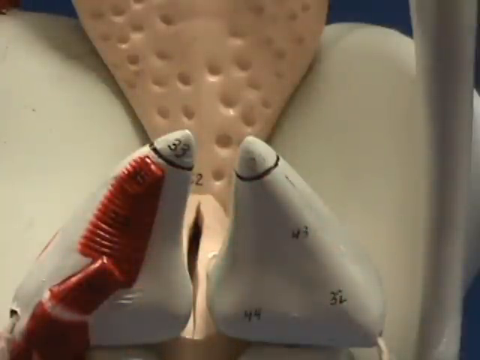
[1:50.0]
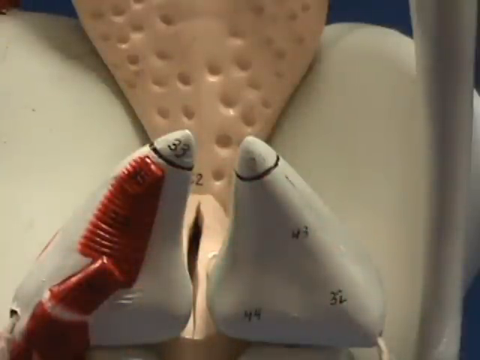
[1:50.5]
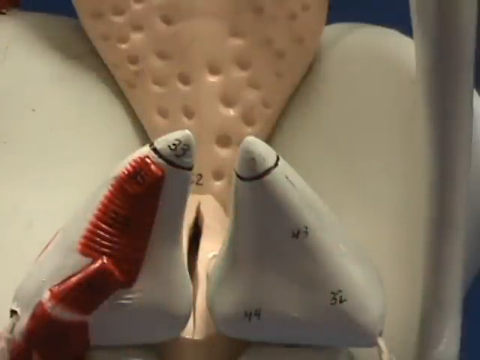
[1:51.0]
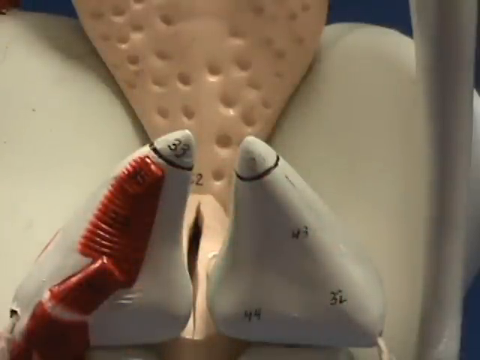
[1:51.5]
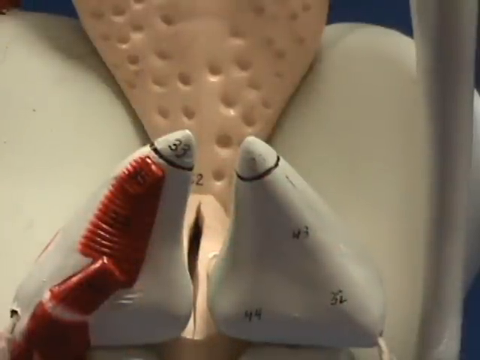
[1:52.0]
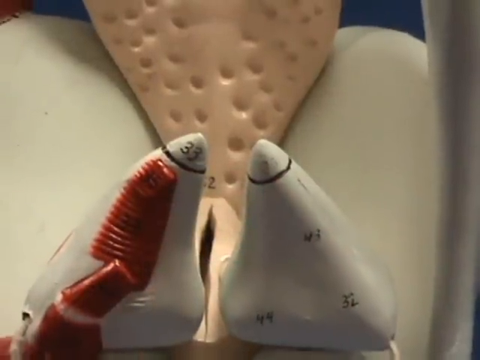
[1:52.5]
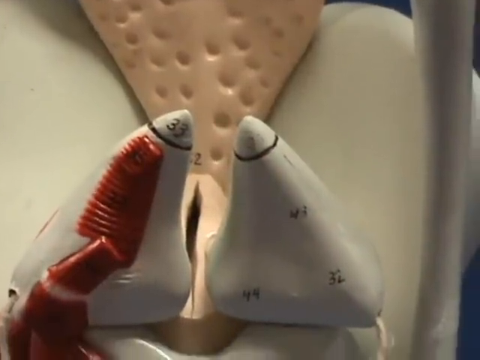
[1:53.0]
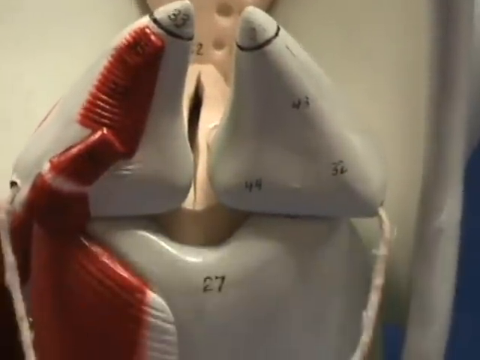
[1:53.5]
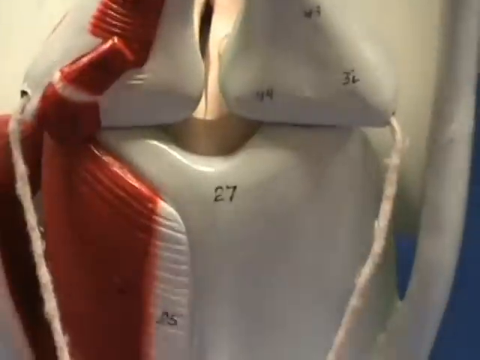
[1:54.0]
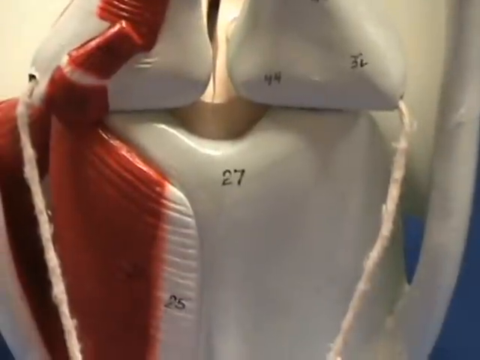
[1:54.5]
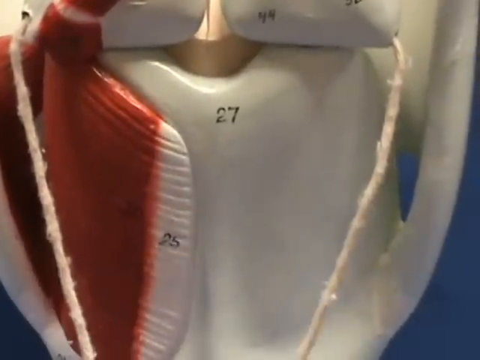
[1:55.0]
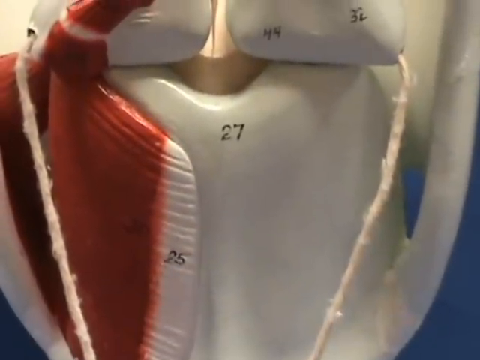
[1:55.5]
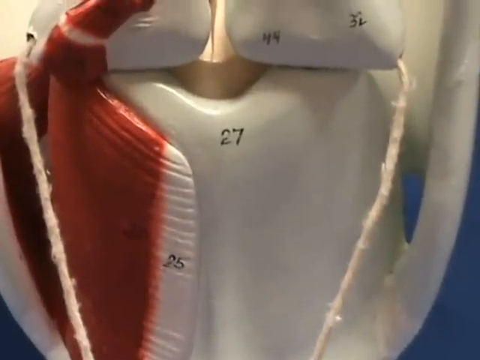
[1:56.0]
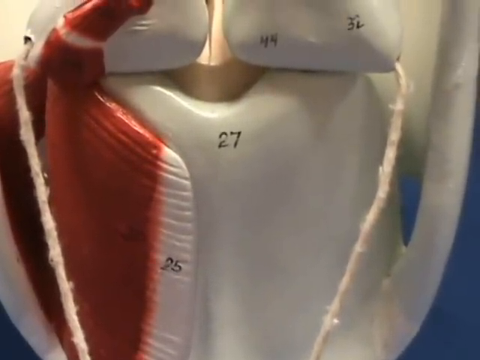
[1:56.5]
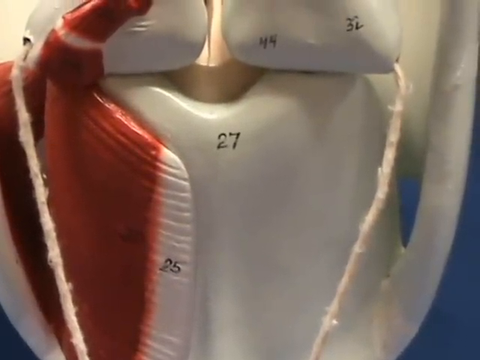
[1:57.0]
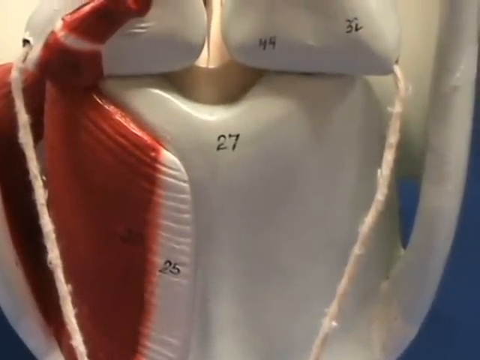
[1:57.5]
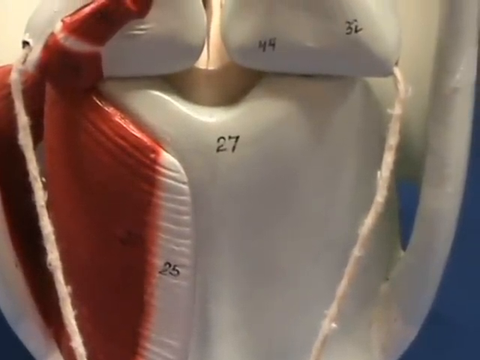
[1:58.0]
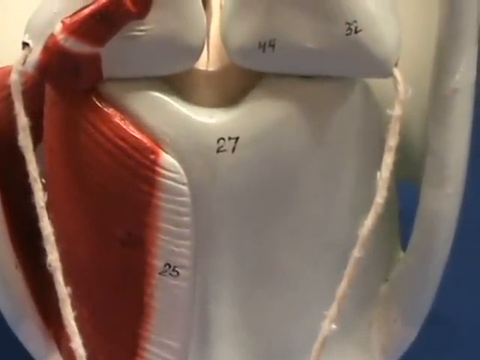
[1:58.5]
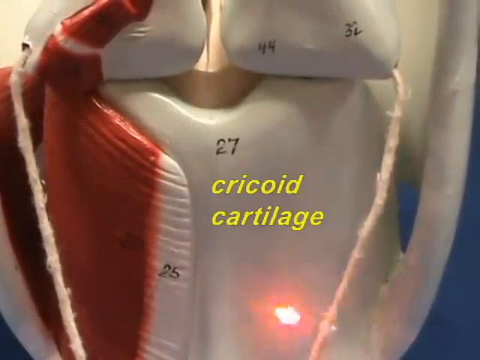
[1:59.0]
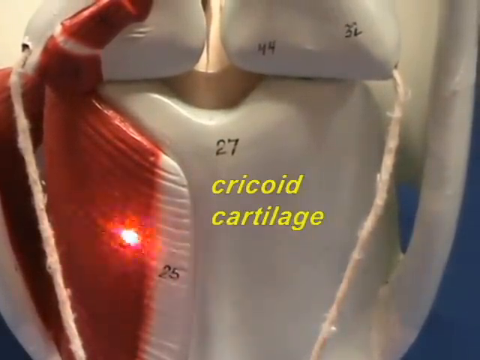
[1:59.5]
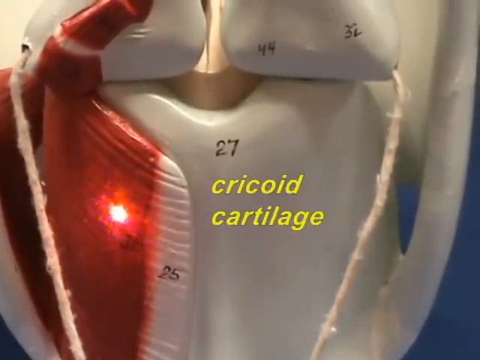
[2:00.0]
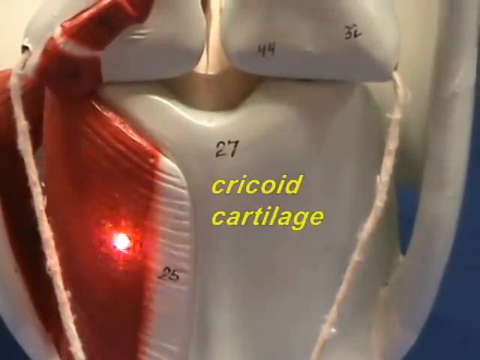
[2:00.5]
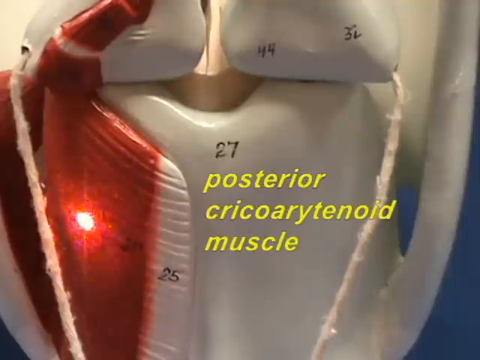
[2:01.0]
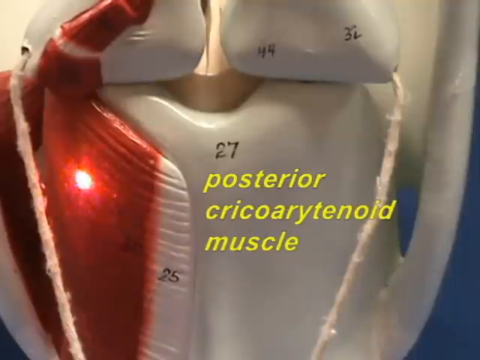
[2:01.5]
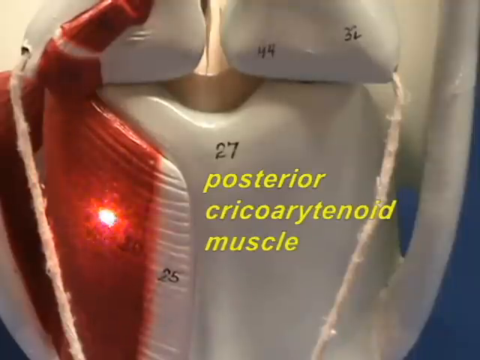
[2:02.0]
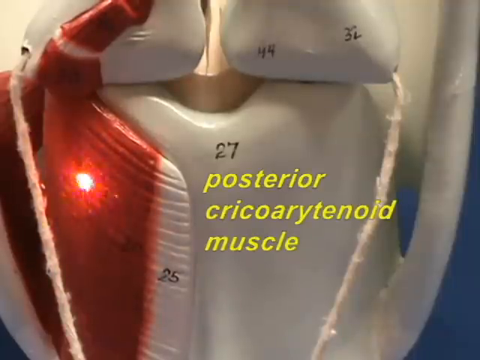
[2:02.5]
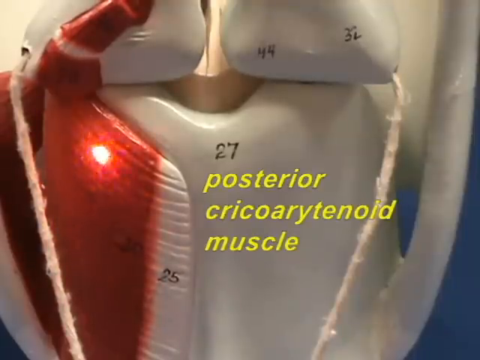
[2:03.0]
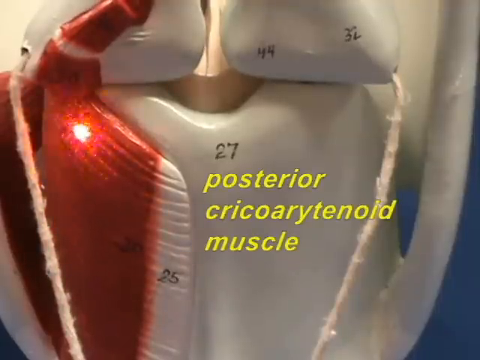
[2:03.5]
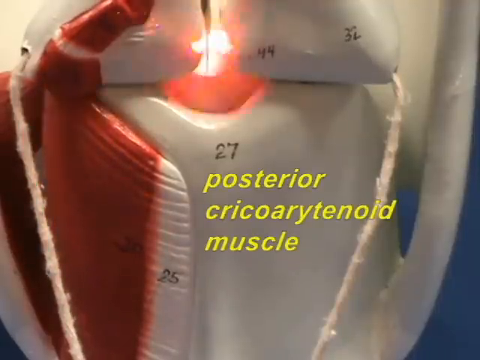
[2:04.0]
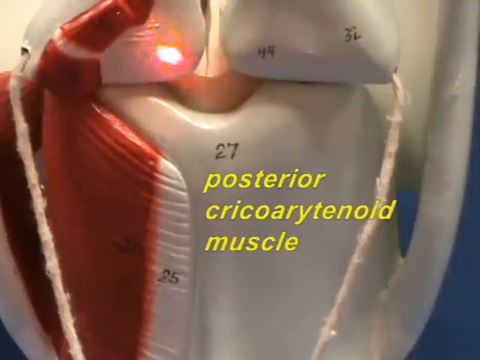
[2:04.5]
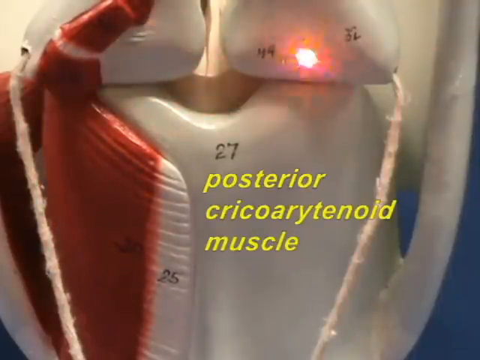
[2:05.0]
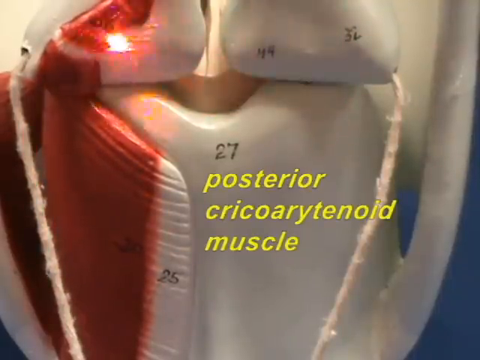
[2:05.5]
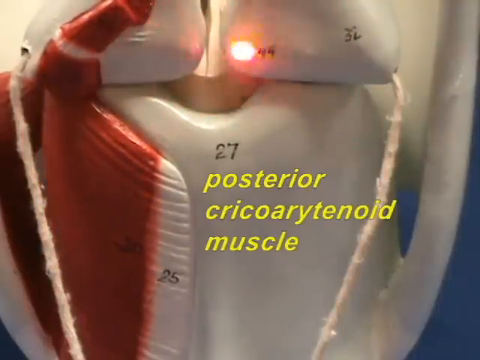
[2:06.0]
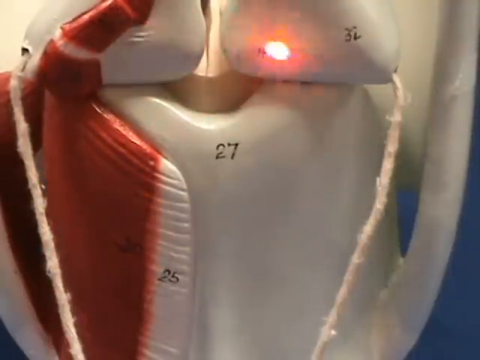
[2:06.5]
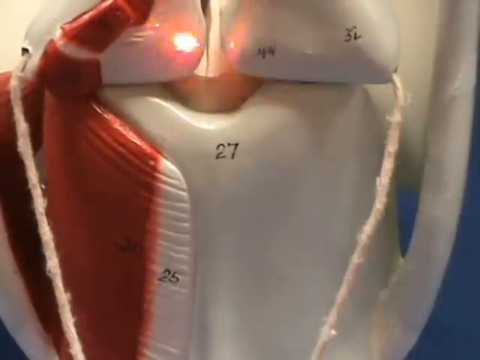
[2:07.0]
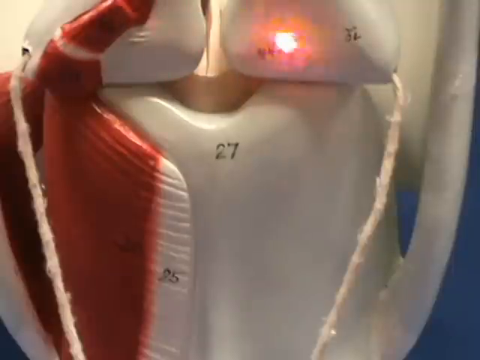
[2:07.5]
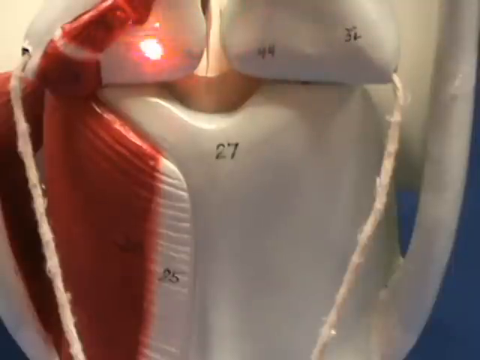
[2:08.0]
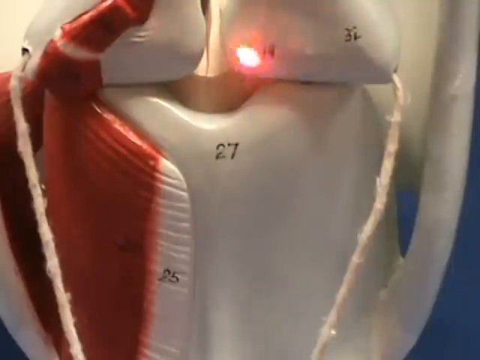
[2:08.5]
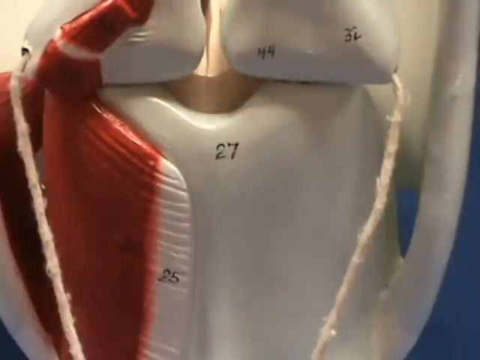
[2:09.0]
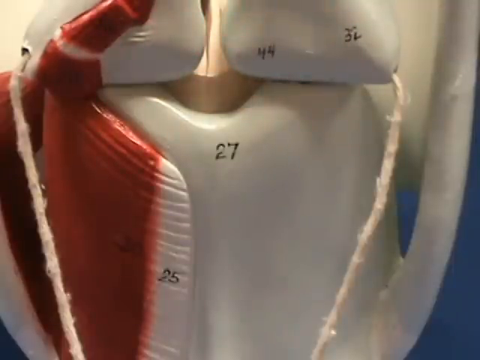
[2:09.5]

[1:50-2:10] An up-close view shows a model of a larynx with a piece that looks like a tongue and bone attached to the back of it, and a large white piece that looks like a bone going over top of it. In the middle of the structure are two large pointy pieces that look like big teeth; they are identical except that the left one, large, white and pointy, has a dark red stripe going down its outside, while the right one does not. The camera slowly pans down to show the bottom of the larynx model. A person with a red laser pointer starts pointing out different areas of the model. He puts the laser on a blood-red area, and "cricoid cartilage" pops up in yellow to the right of it. That goes away, and "posterior cricoartenoid muscle" pops up.